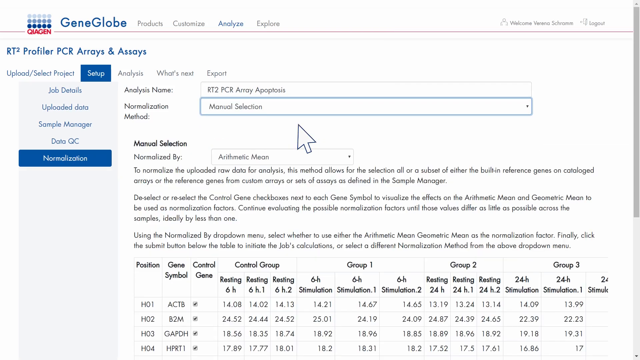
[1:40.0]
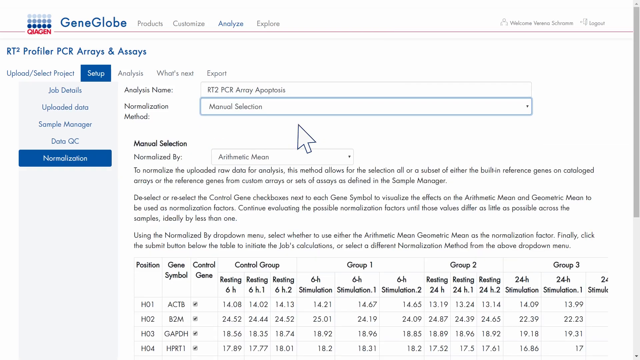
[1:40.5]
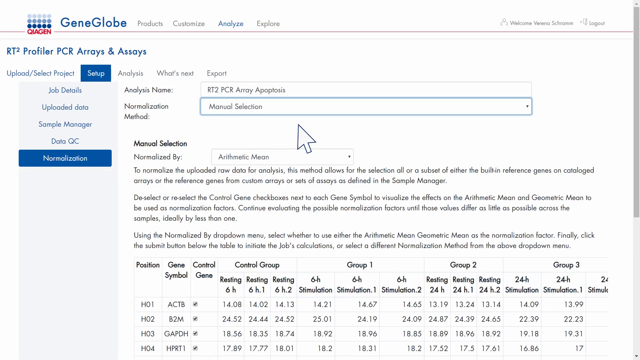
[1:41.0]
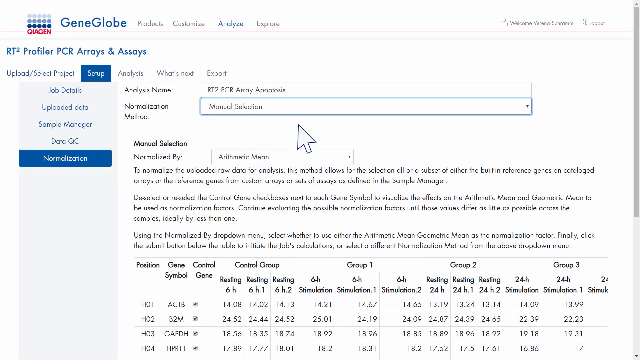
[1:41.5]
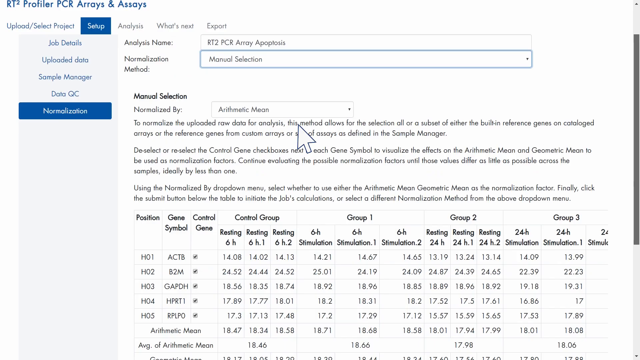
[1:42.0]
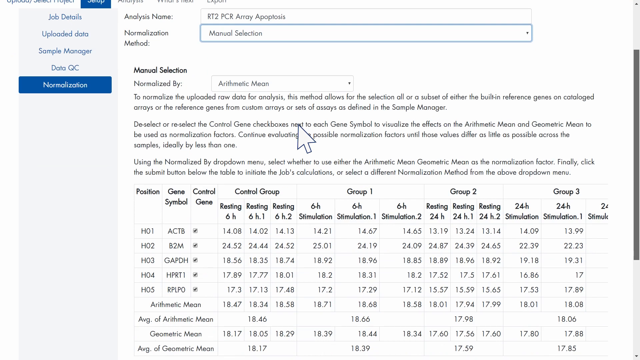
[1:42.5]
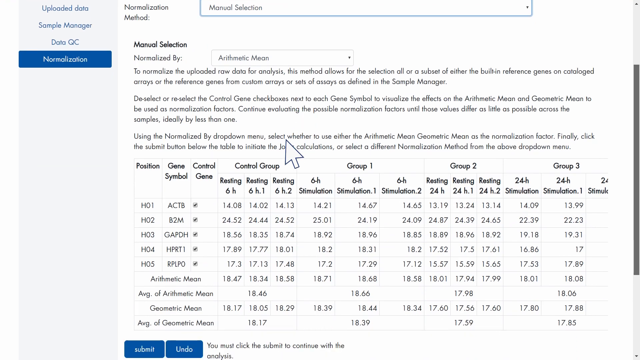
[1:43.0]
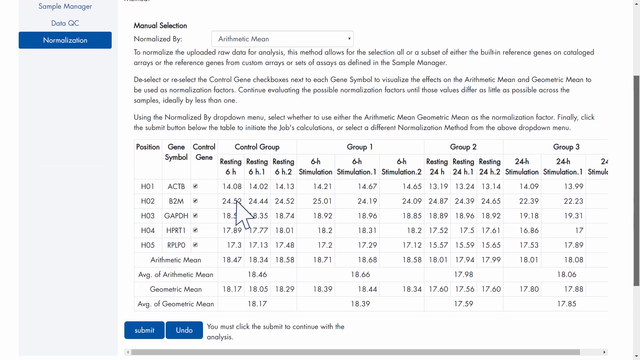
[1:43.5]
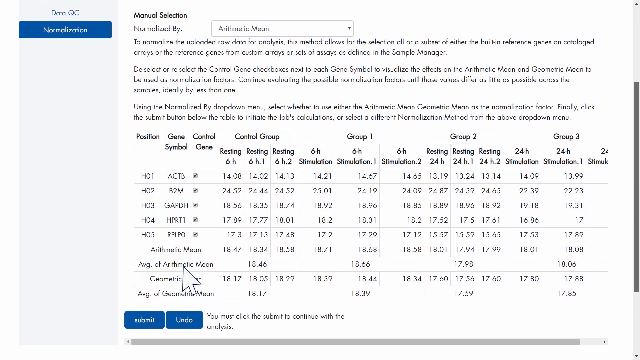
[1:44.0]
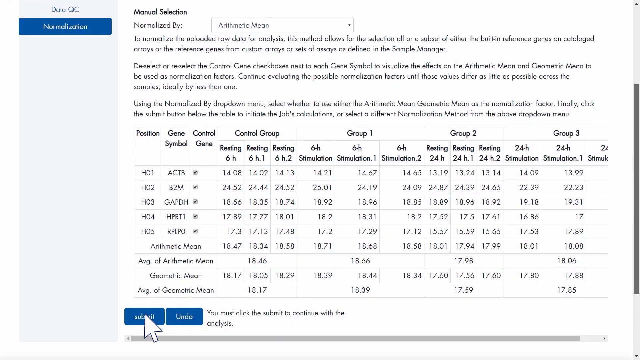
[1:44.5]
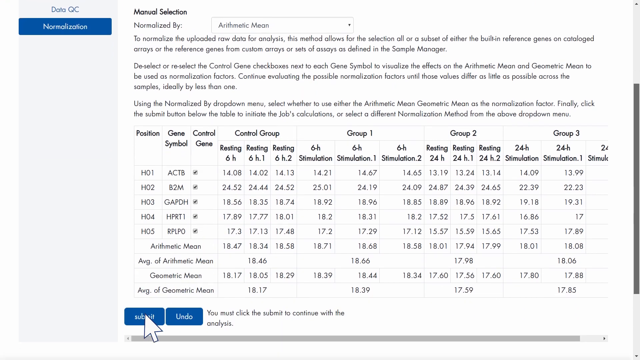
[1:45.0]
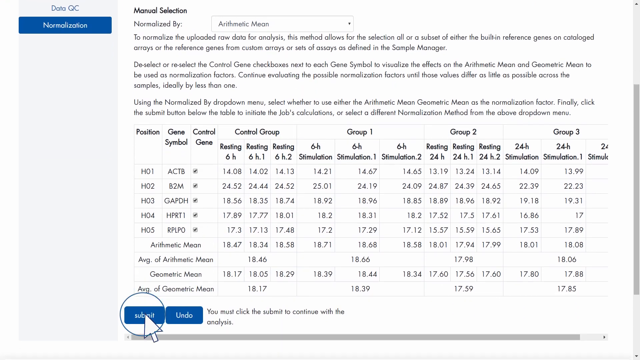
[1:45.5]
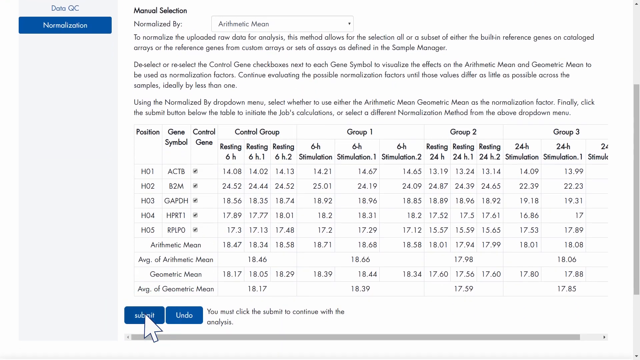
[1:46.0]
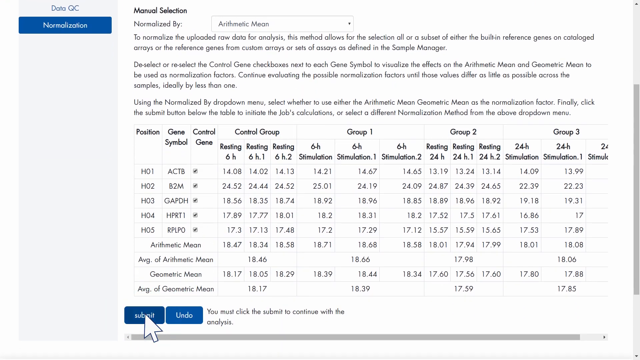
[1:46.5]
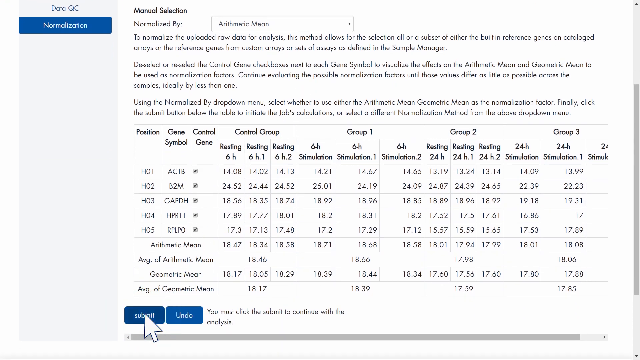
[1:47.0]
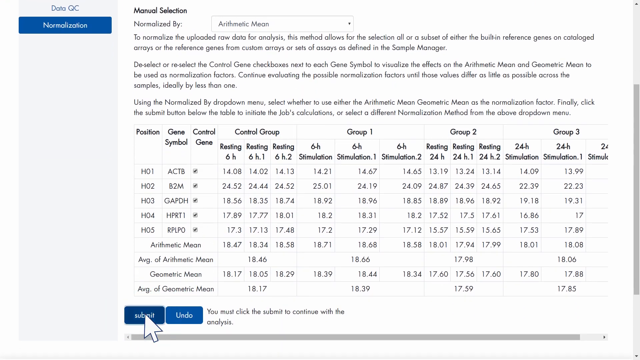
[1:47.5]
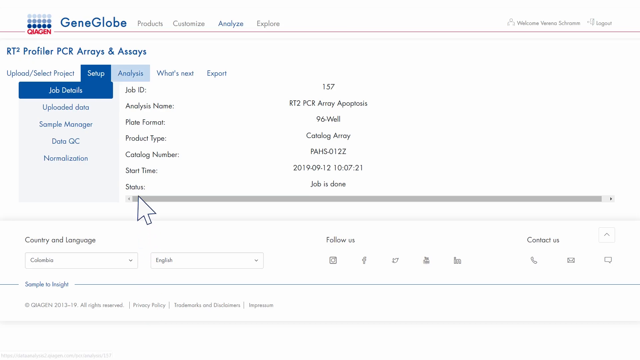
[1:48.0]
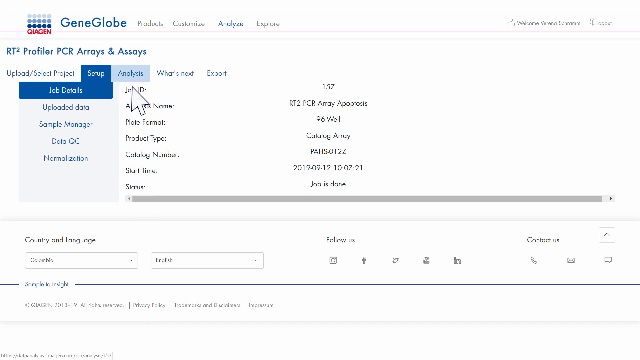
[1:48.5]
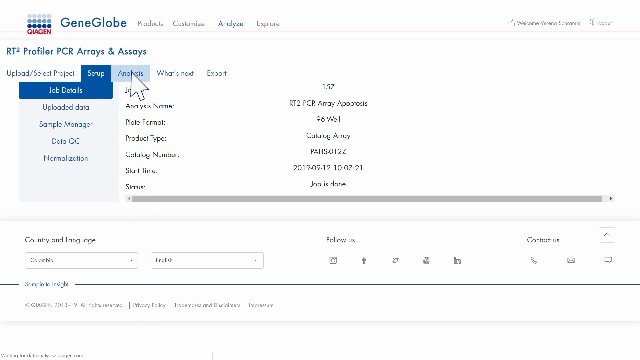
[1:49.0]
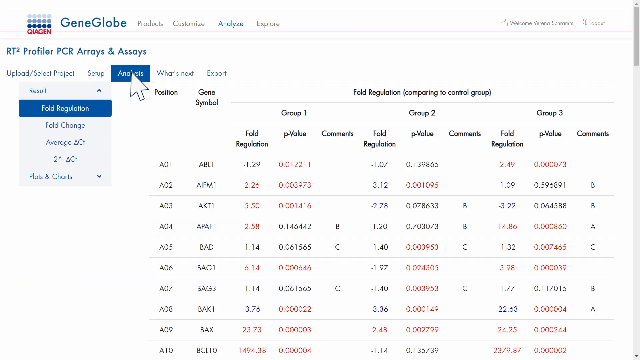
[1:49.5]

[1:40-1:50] The video continues to the normalization section under Profile PCR Arrays and Assays, with an analysis name beginning "RT2 PCR Array" selected. Another page says "Manual Selection" and "Normalized by Arithmetic Mean", with the text "Normalize the uploaded raw data for analysis. This method allows for the selection of all or a subset of either the built-in reference genes on cataloged arrays or the reference genes from custom arrays or sets of assays as defined in the Sample Manager. Deselect or reselect the control gene checkboxes next to each gene symbol to visualize the effects on the arithmetic mean and geometric mean to be used as normalization factors. Continue evaluating the possible normalization factors until those values differ as little as possible across the samples, ideally by less than one."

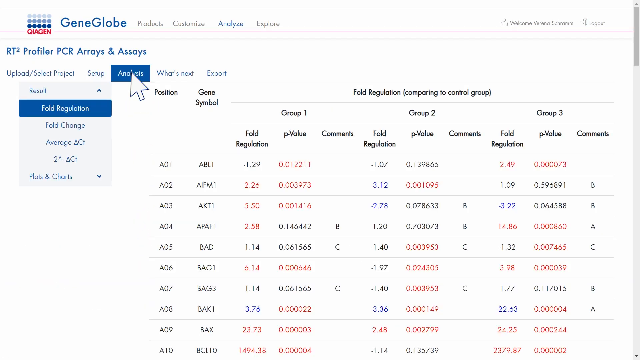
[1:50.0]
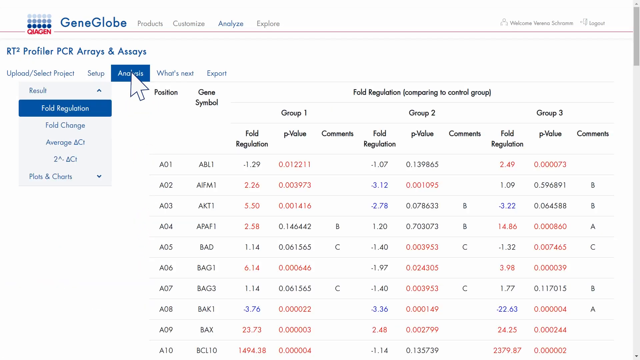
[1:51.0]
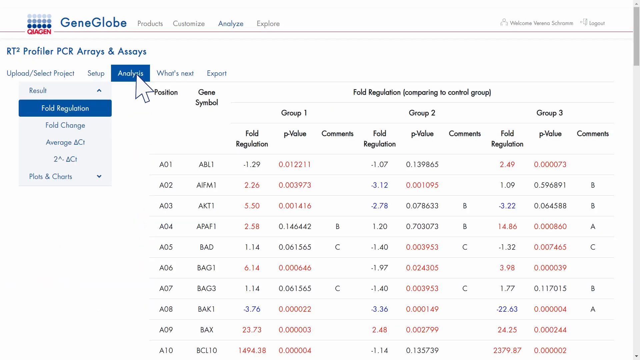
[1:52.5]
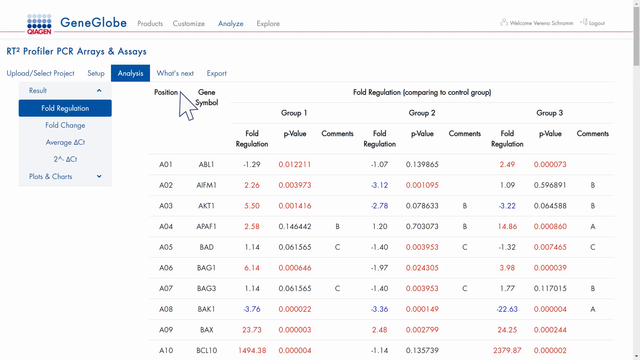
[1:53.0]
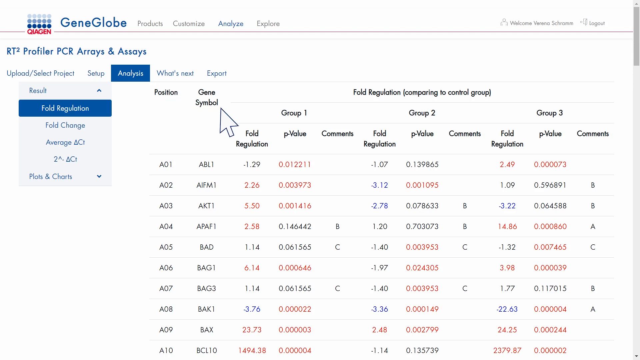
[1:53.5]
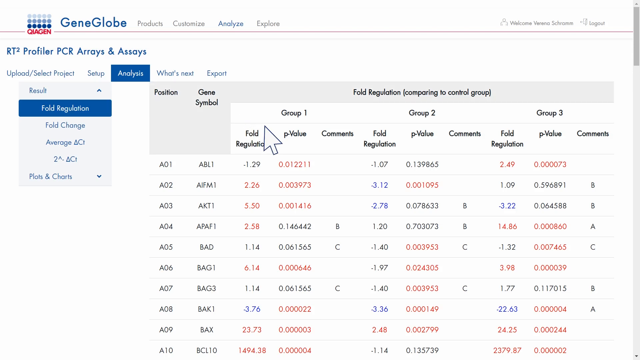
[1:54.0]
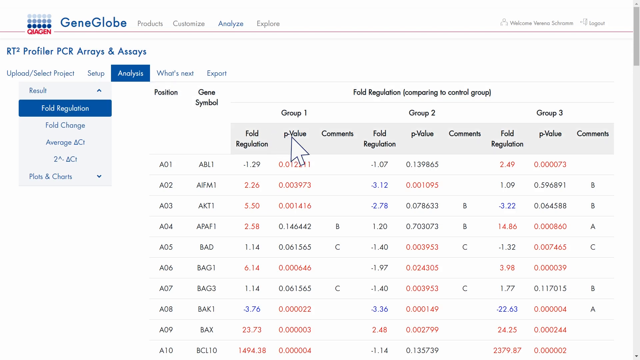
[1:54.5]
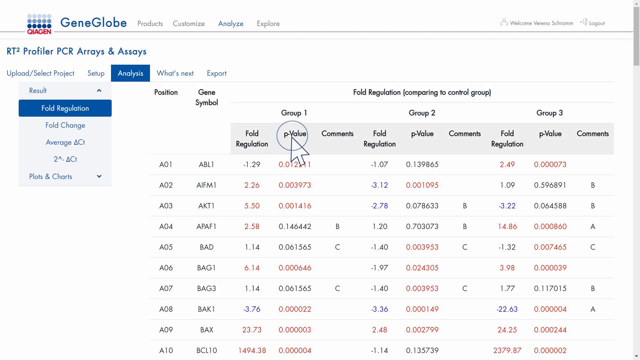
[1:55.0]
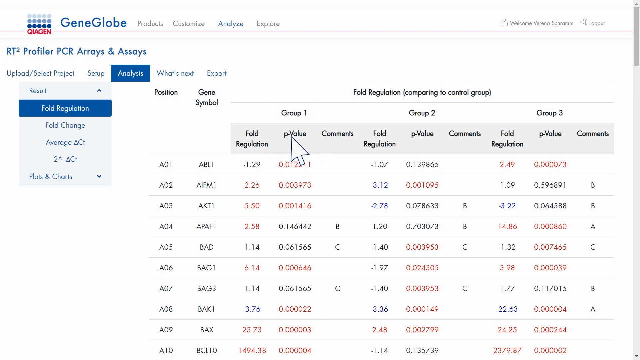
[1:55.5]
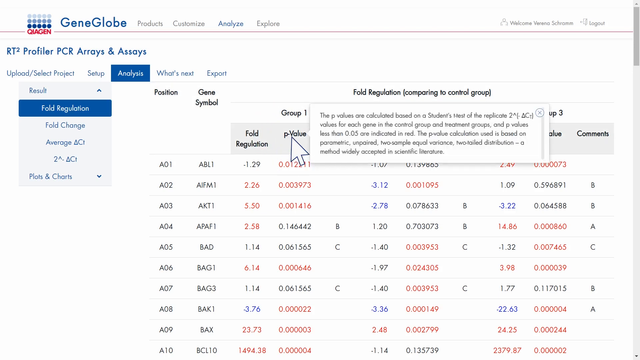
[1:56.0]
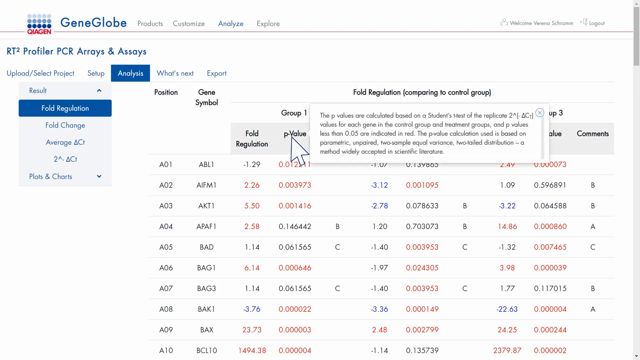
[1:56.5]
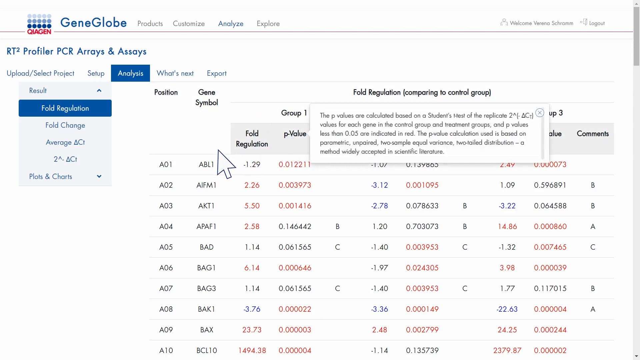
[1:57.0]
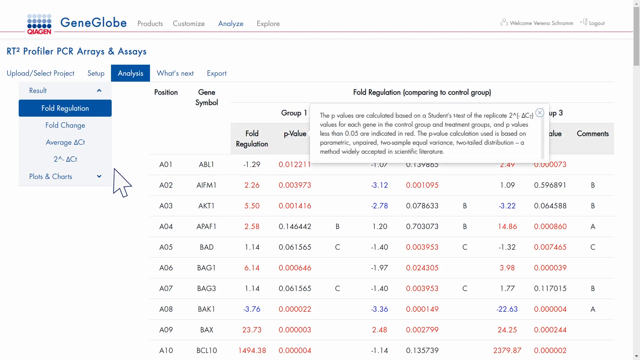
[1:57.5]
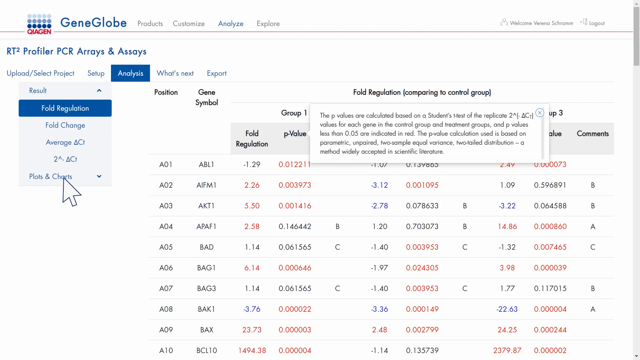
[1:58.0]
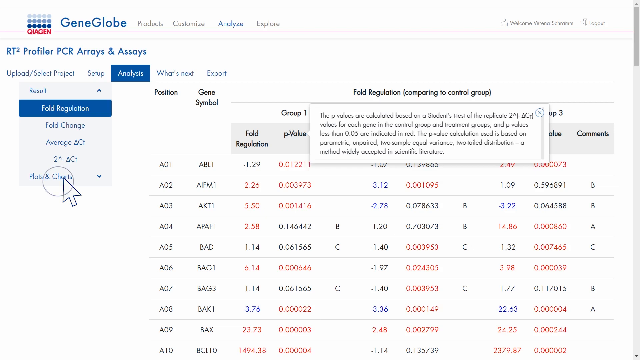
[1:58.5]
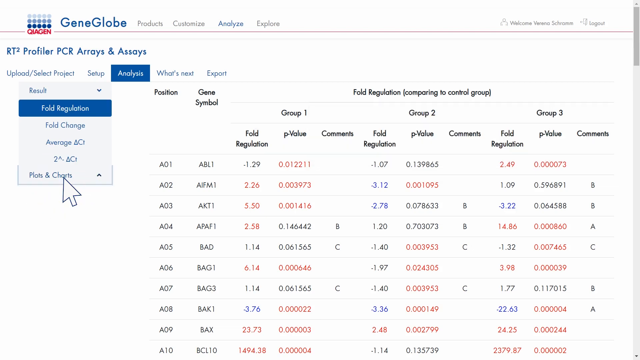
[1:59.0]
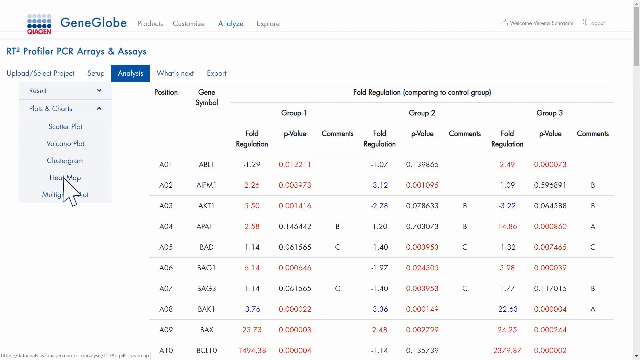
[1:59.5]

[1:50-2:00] The GenoGlobe web page for profile PCR arrays and assays is shown, and the analysis page is selected with the mouse. The page shows columns for position, gene symbol, fold regulation compared to the control group, and p-values. The pointer hovers over the analysis tab, and selecting one of the p-values shows its definition: "p-values are calculated based on a student's test of the replicated values of each gene in the control group and treatment groups" and "p-values less than 0.05 are indicated in red."